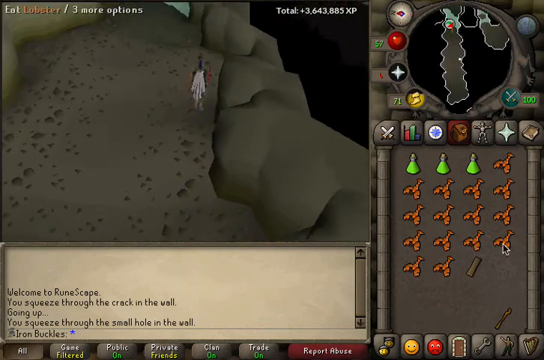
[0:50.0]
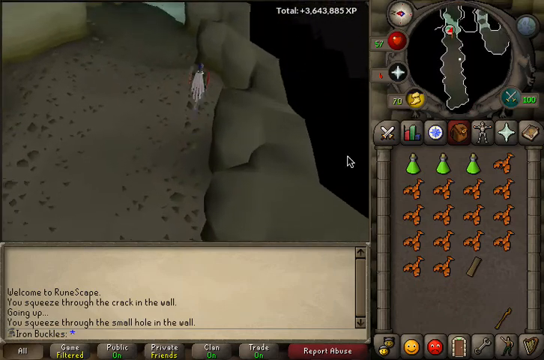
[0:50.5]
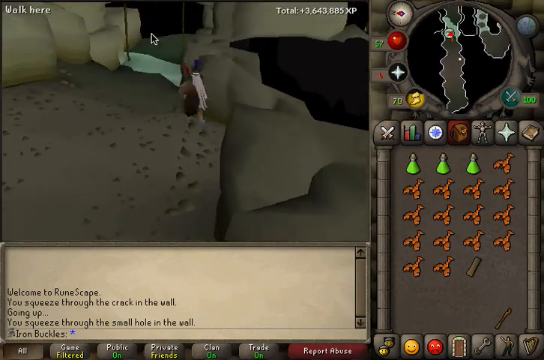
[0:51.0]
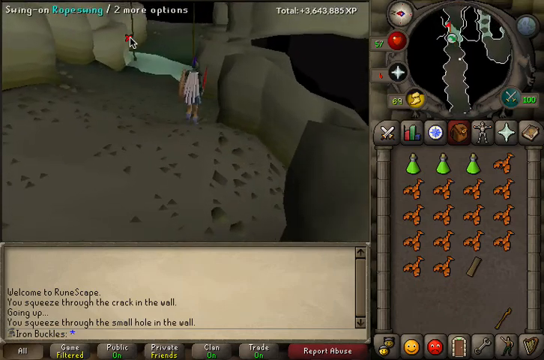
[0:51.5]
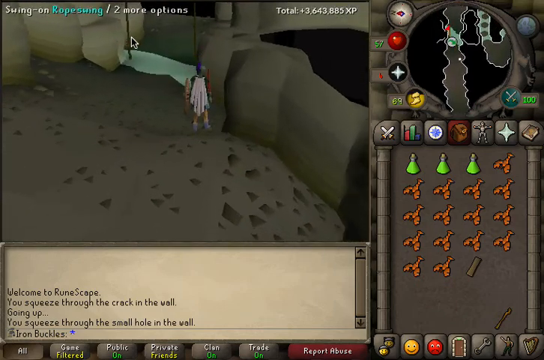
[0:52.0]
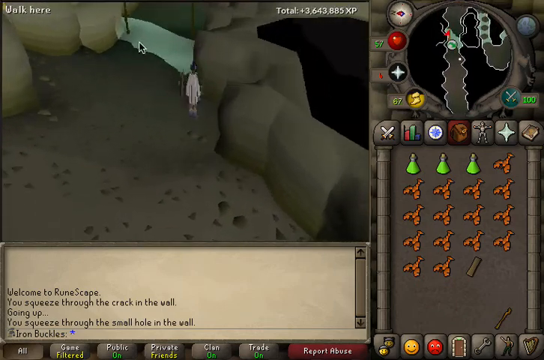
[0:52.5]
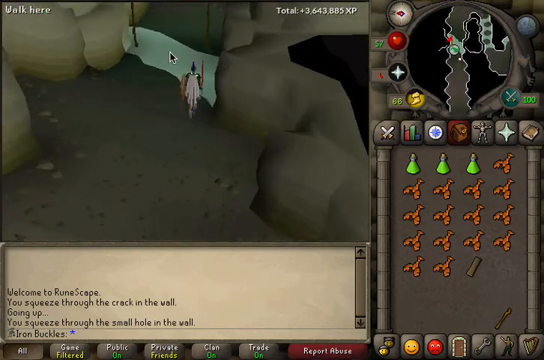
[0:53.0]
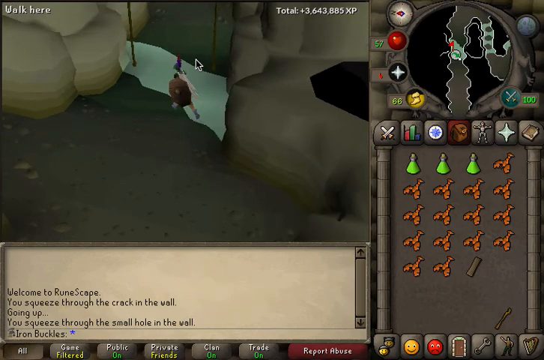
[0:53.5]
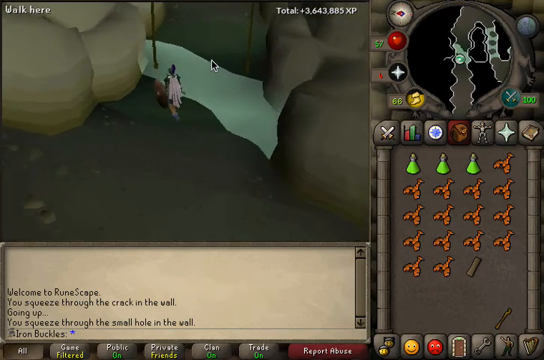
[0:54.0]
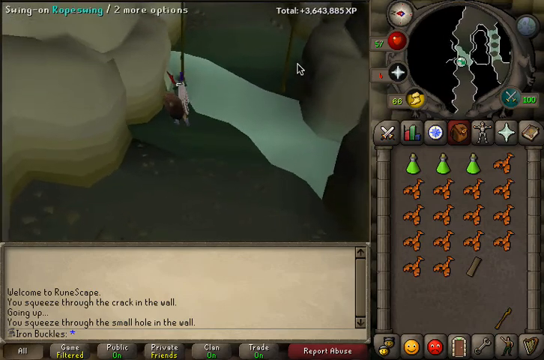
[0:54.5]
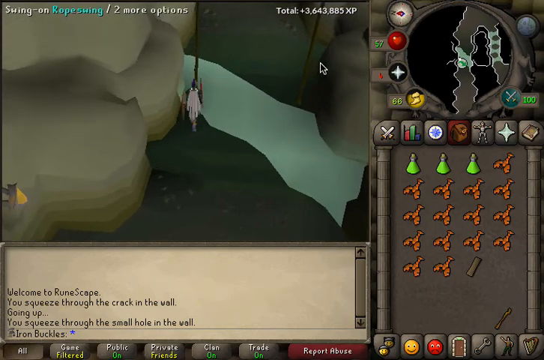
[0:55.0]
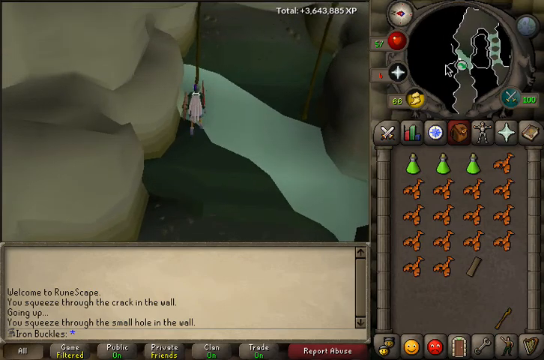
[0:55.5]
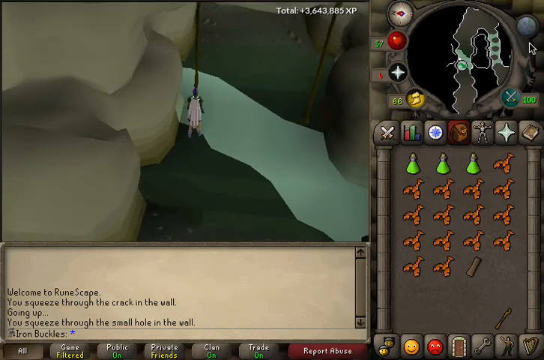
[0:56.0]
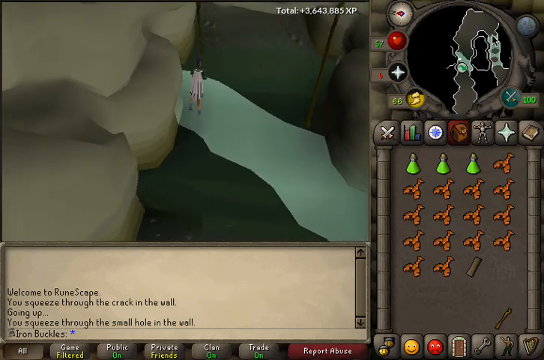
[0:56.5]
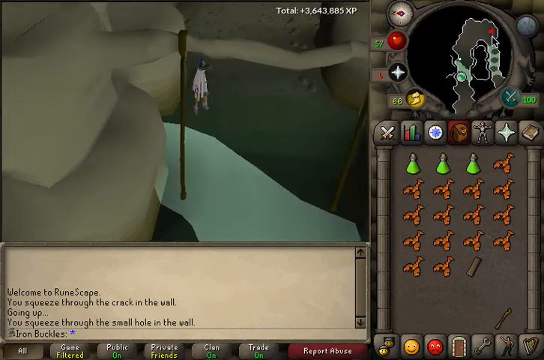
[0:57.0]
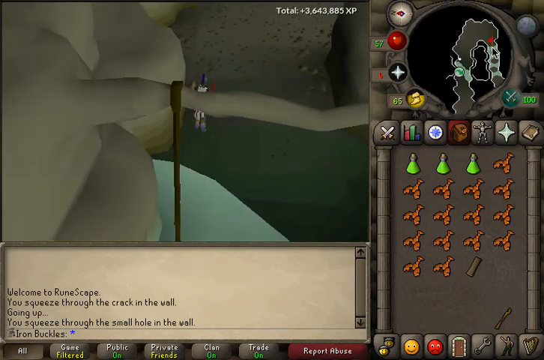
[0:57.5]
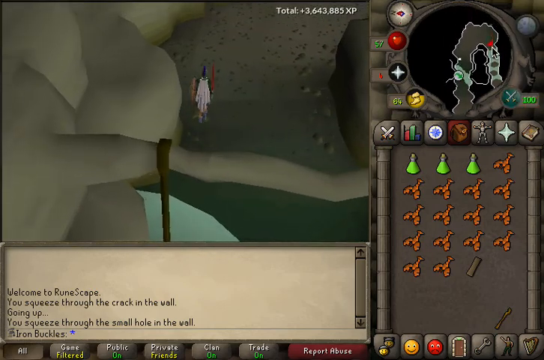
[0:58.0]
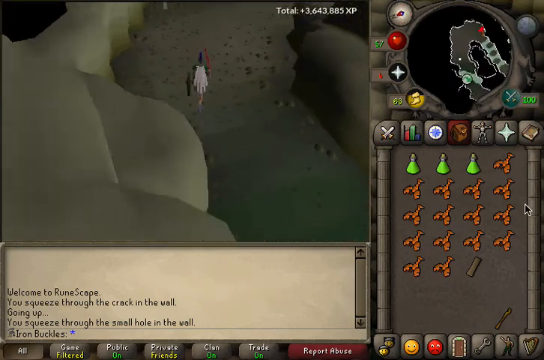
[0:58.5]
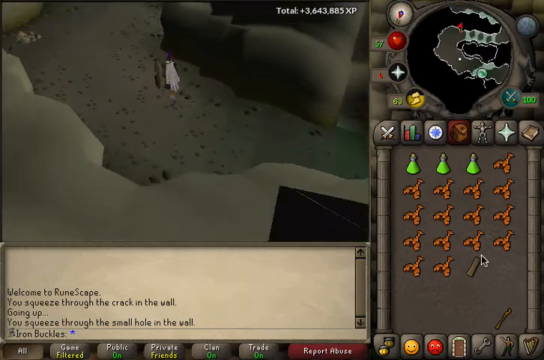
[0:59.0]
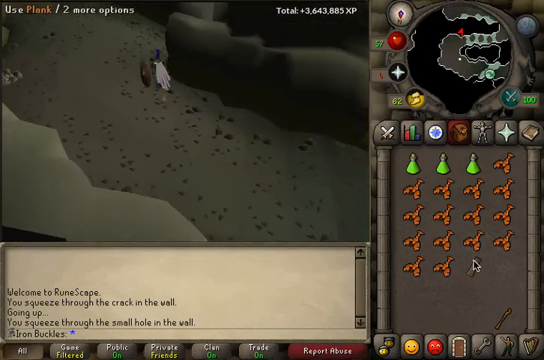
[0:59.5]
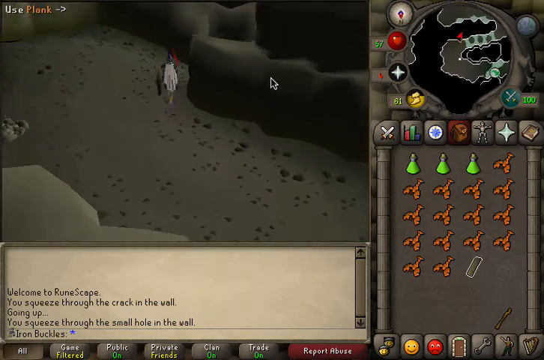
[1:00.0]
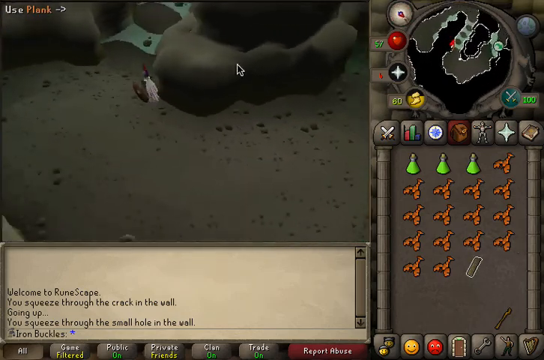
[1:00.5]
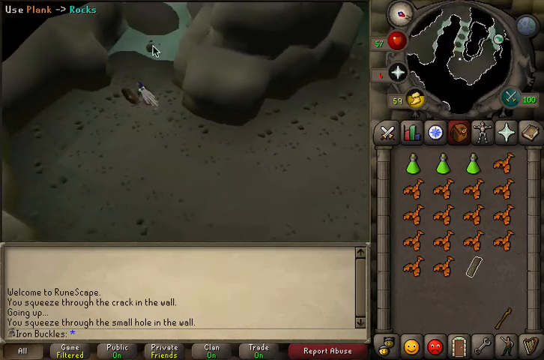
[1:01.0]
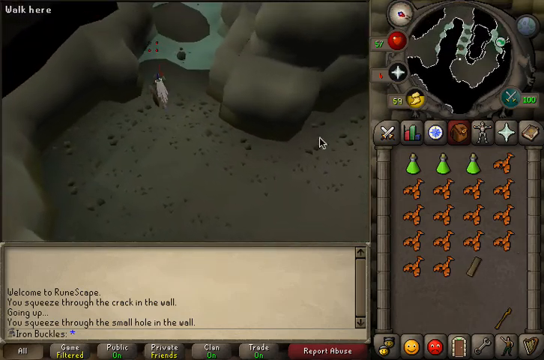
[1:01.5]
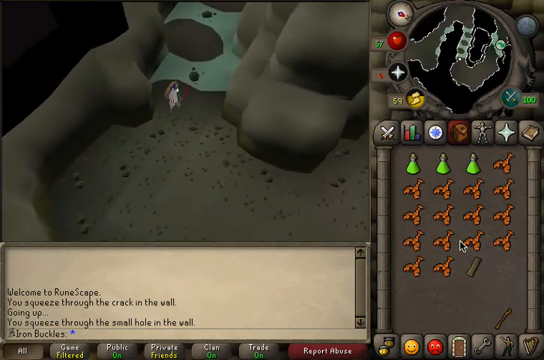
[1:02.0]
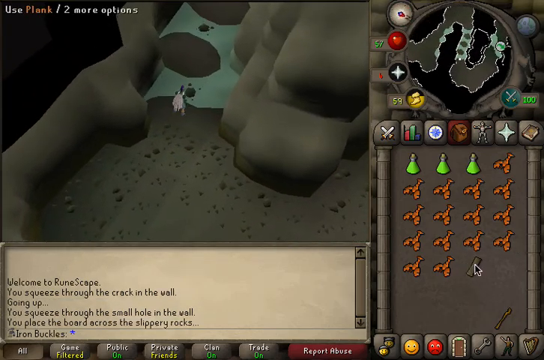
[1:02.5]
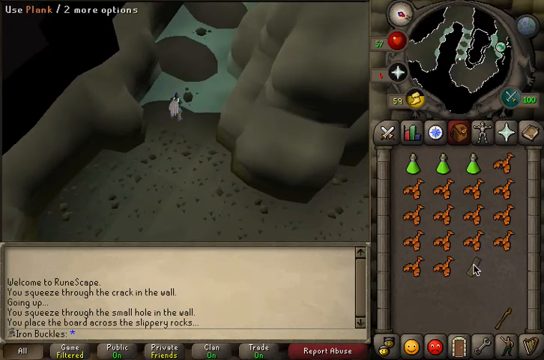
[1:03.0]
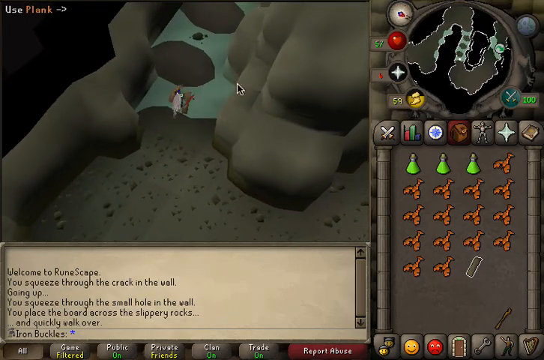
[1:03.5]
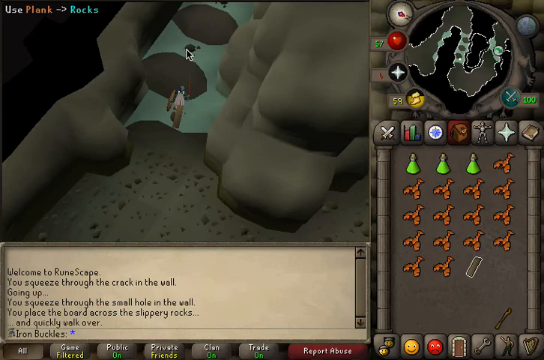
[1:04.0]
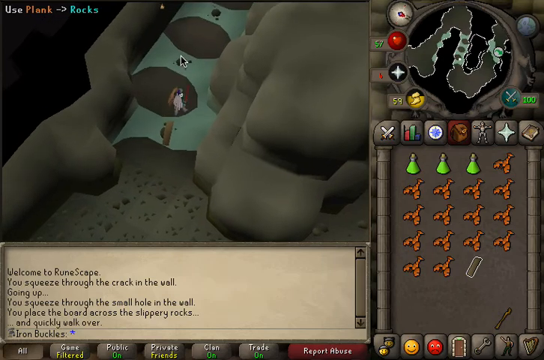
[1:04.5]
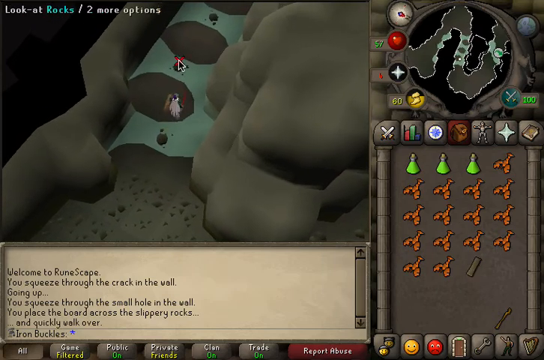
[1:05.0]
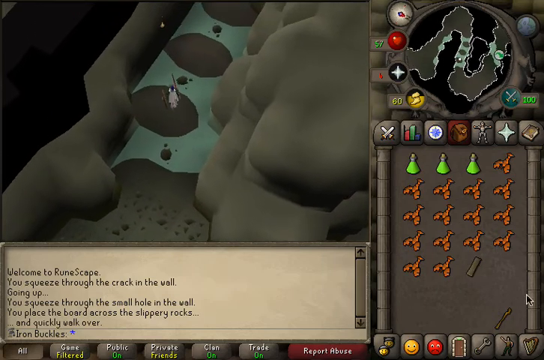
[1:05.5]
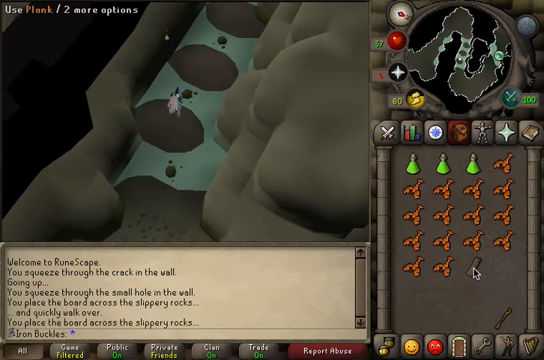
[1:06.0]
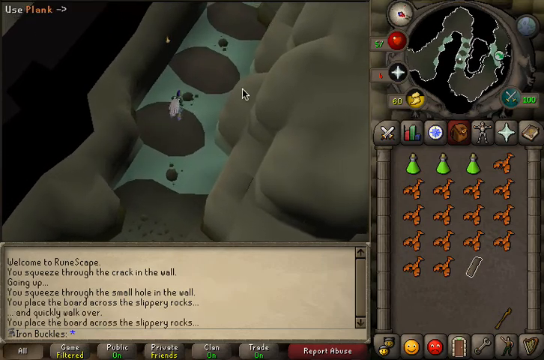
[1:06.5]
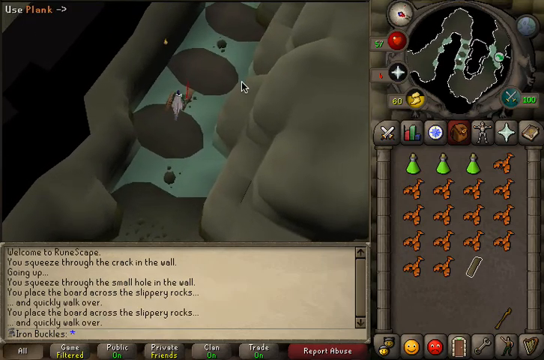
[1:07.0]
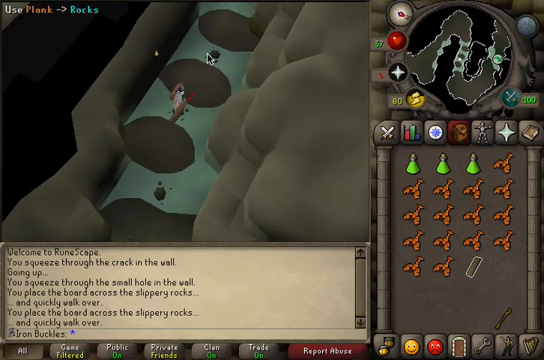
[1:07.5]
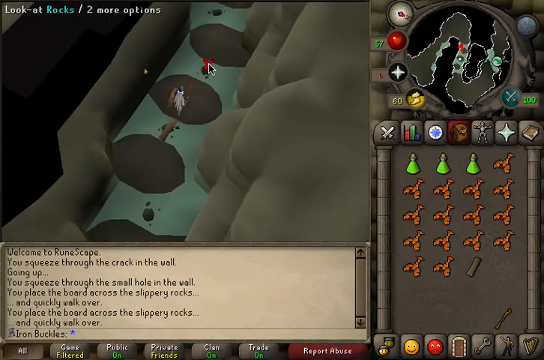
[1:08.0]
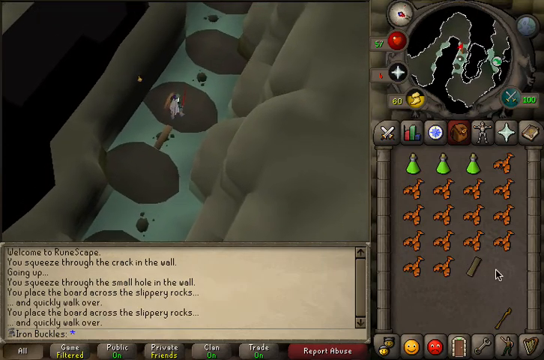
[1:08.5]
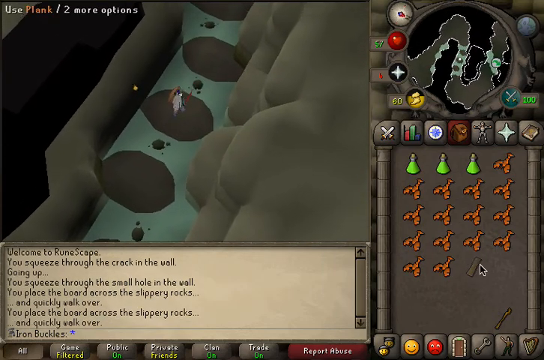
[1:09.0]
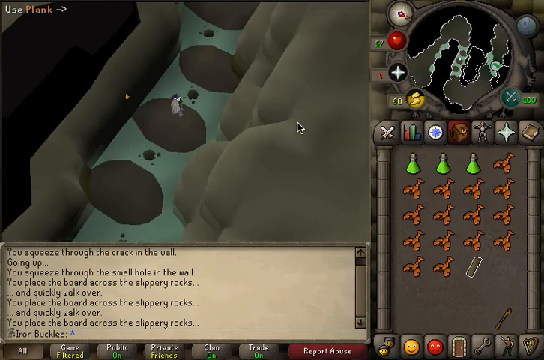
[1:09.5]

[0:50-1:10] From an overhead view, the player's character appears to be heading down a cave-like corridor. The map in the right-hand corner shows where the character seems to be, and outside that area it seems dark, so it looks like it may be a cave. Below the frame is a communication area that says "welcome to Runescape" along with other information, and it also says "you squeeze through the small hole in the wall." The character moves quickly, almost looking like they are running past various objects across what seem to be small hills over some type of water. A plank comes down so they can cross over; something that looks like a plank is apparently highlighted and clicked before they get there, and then they click downward and click the spot where they want the character to walk.